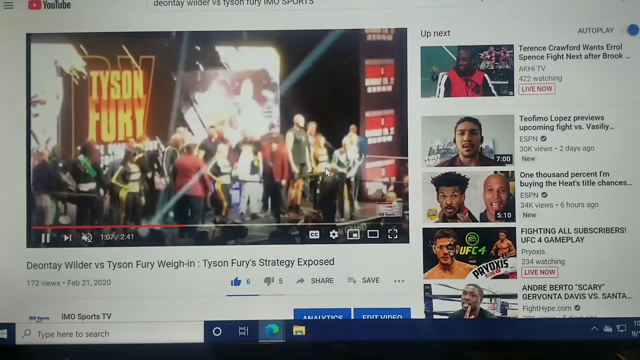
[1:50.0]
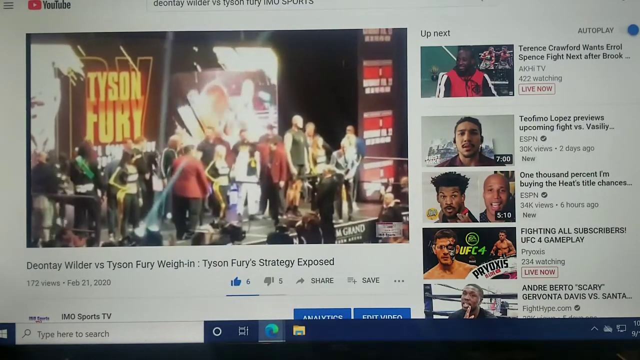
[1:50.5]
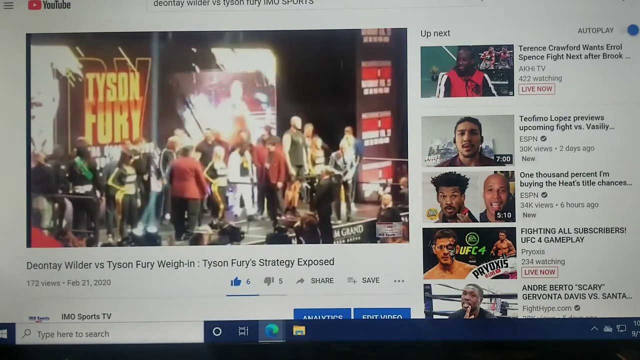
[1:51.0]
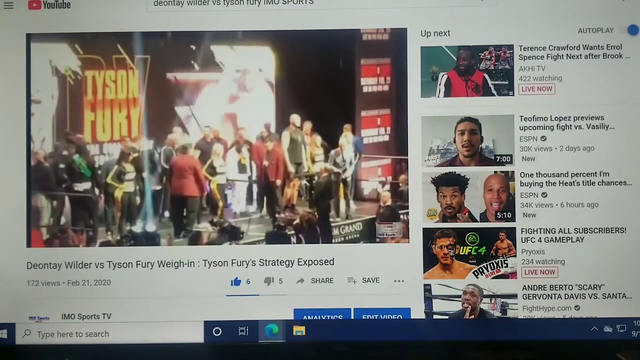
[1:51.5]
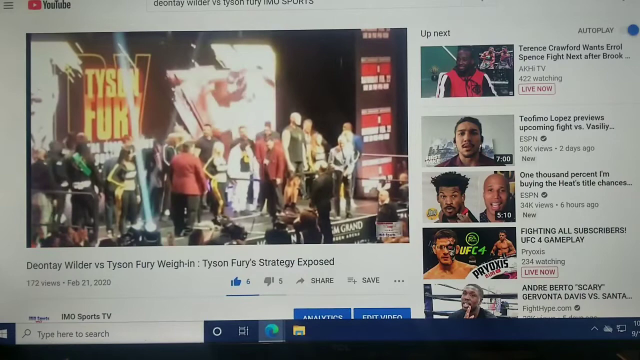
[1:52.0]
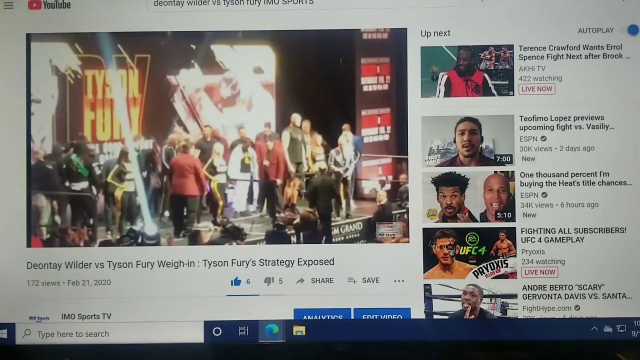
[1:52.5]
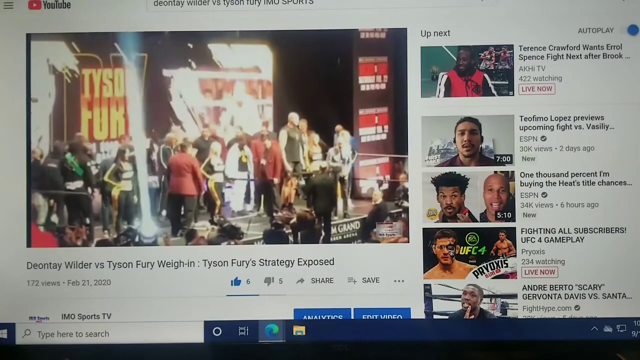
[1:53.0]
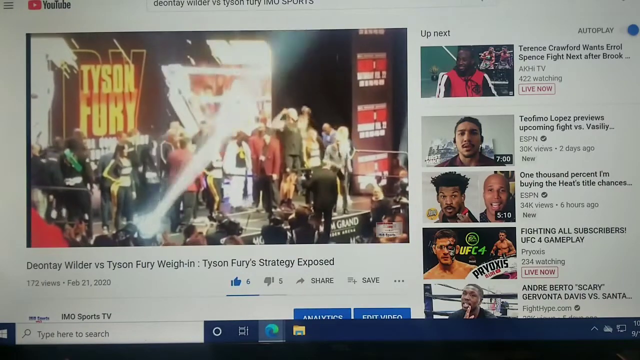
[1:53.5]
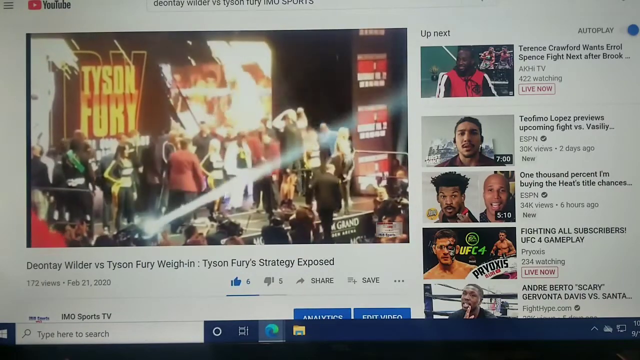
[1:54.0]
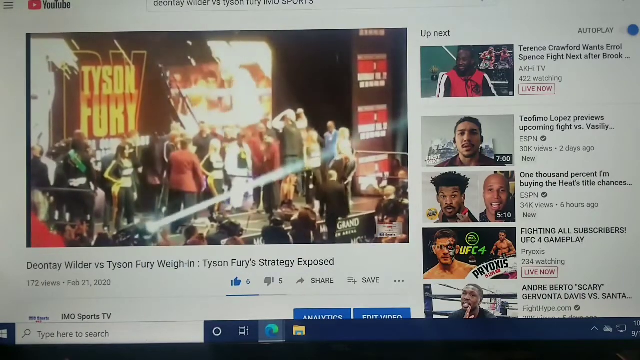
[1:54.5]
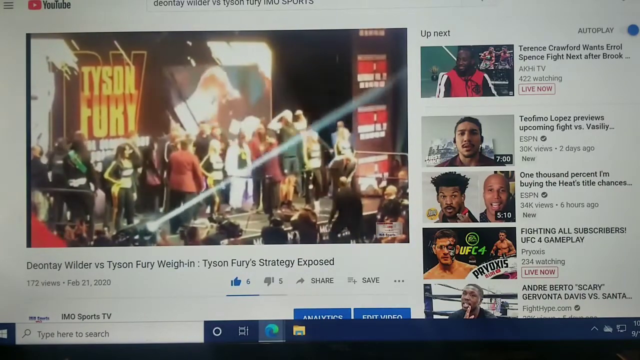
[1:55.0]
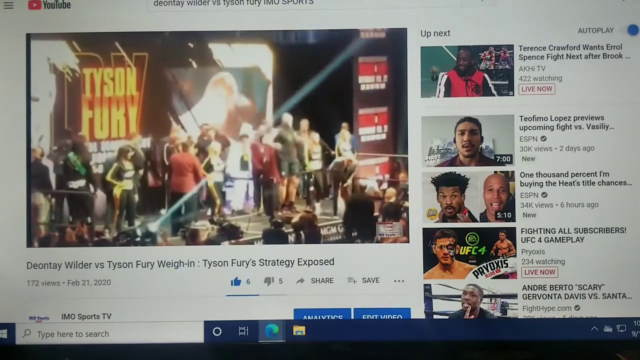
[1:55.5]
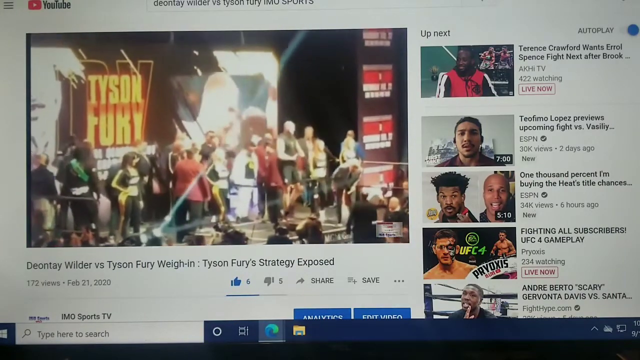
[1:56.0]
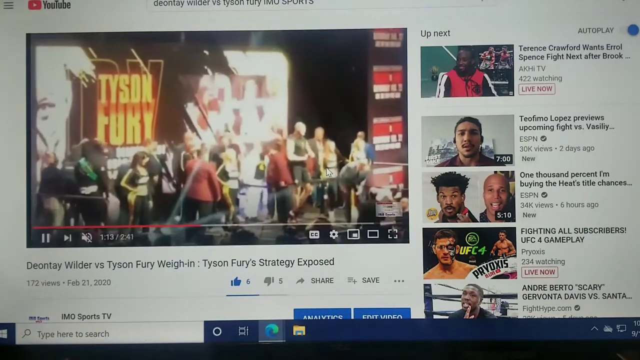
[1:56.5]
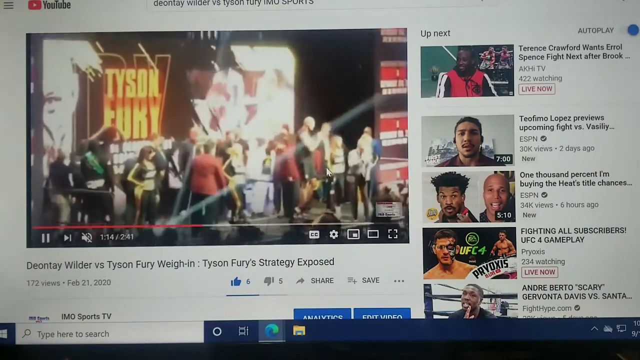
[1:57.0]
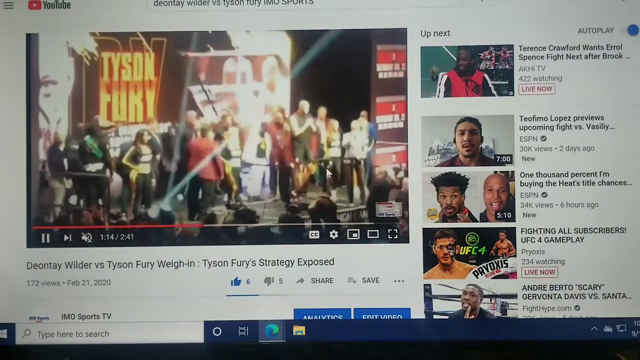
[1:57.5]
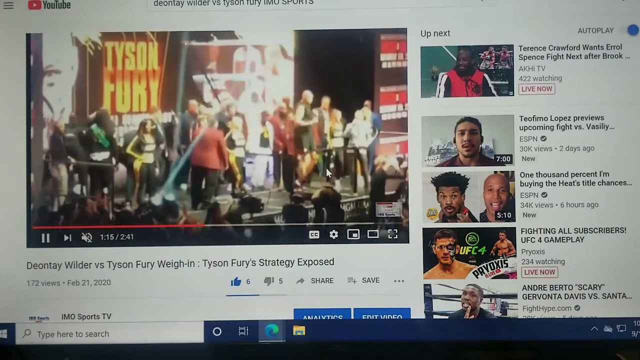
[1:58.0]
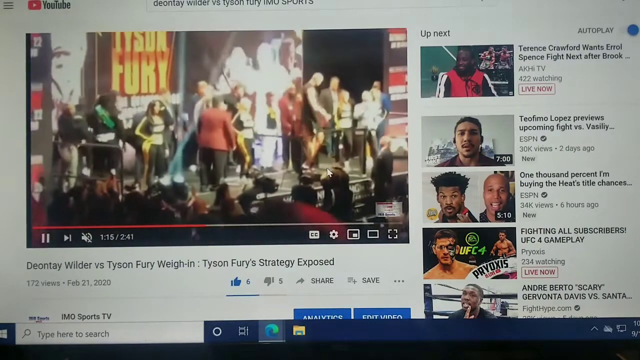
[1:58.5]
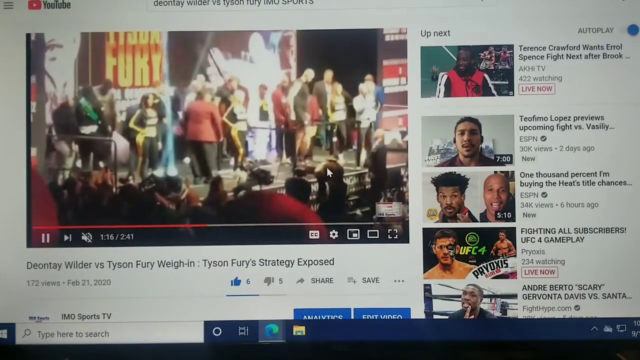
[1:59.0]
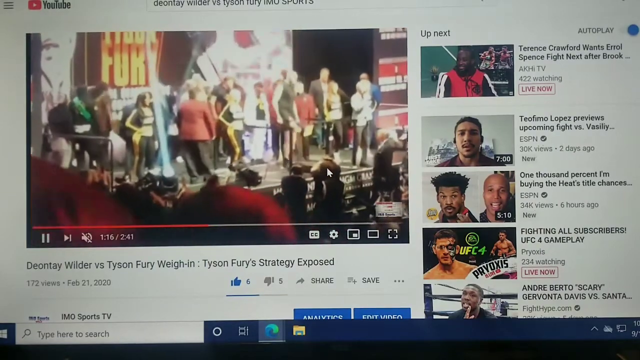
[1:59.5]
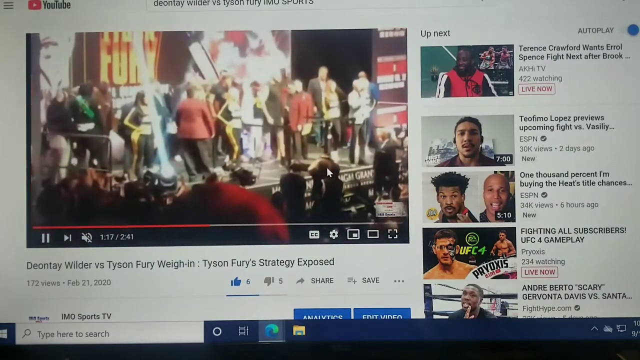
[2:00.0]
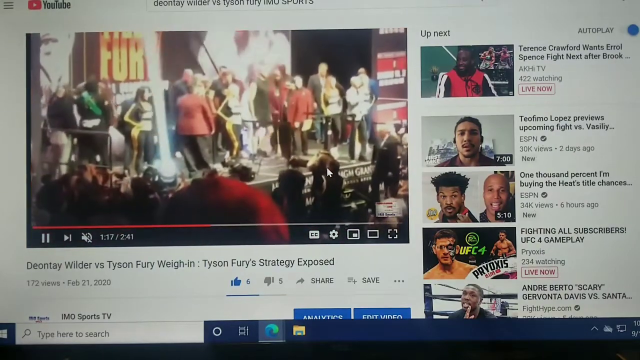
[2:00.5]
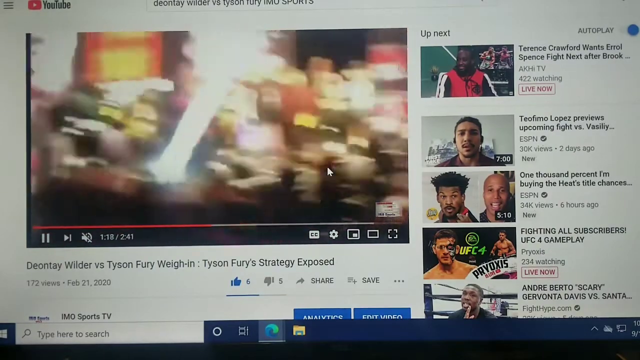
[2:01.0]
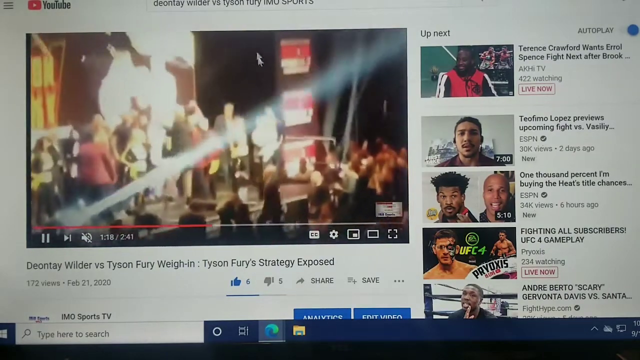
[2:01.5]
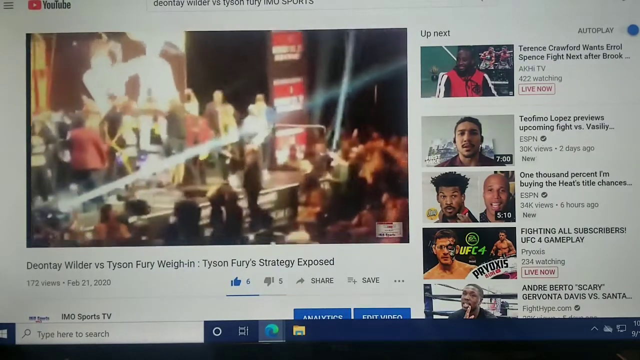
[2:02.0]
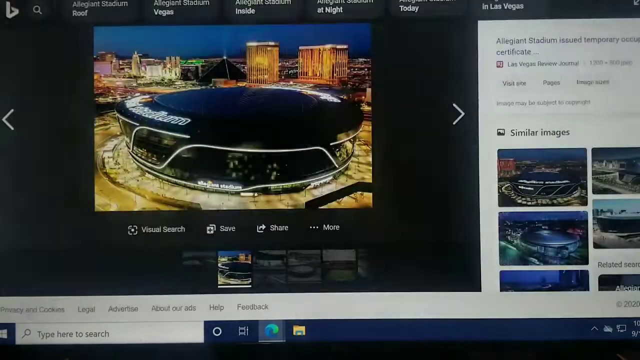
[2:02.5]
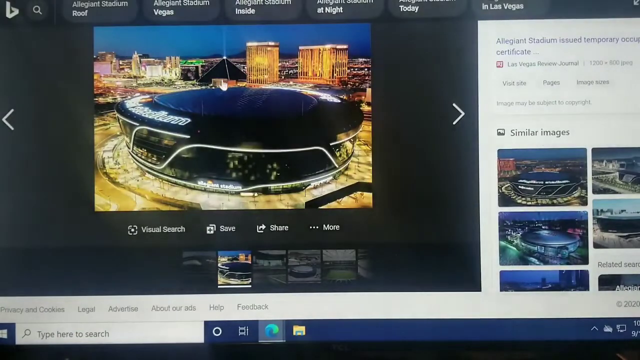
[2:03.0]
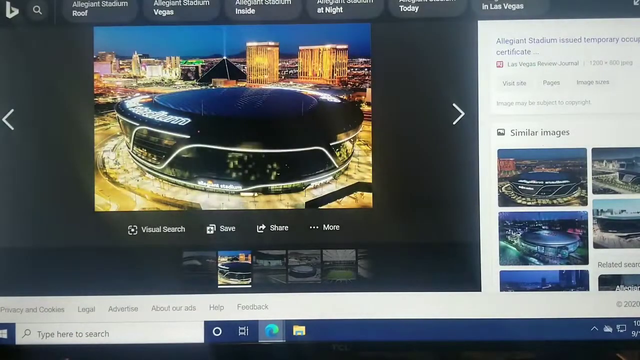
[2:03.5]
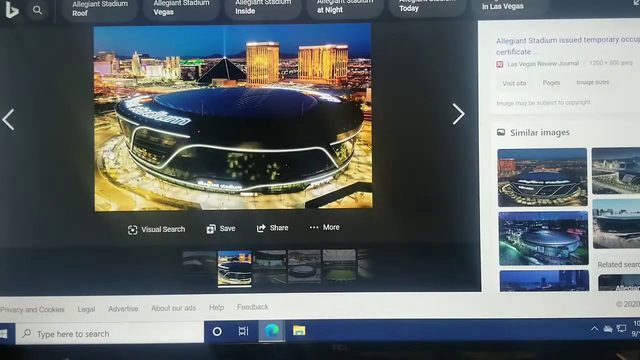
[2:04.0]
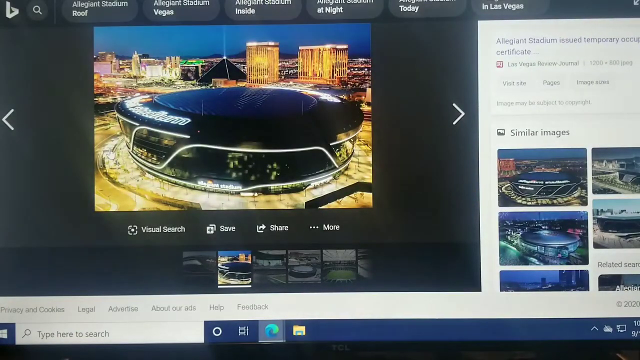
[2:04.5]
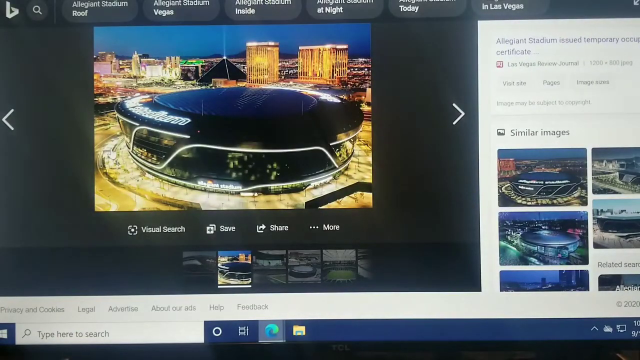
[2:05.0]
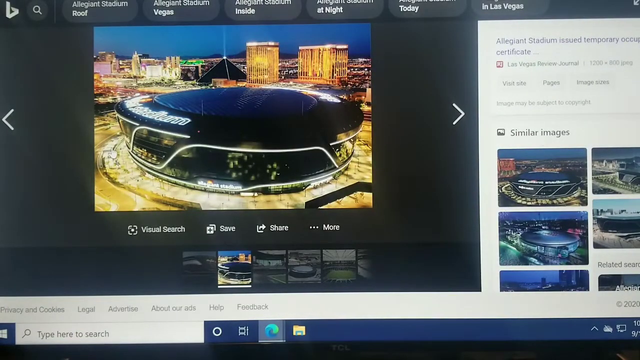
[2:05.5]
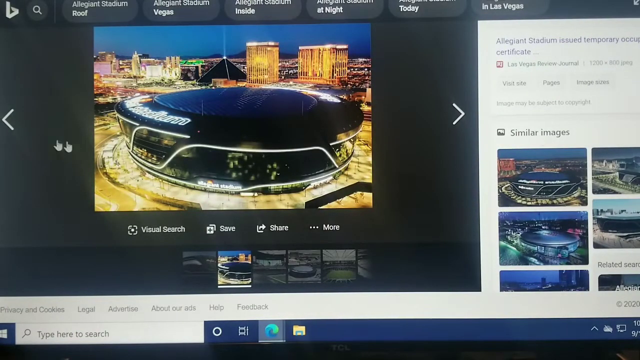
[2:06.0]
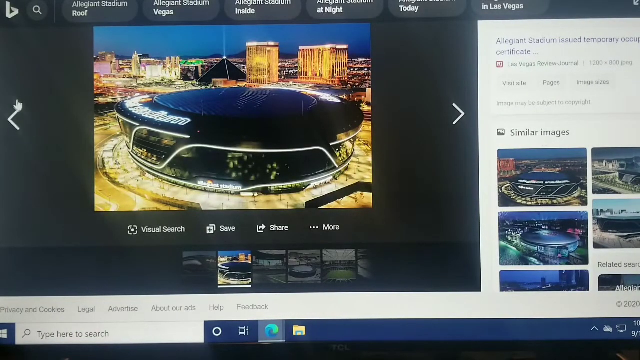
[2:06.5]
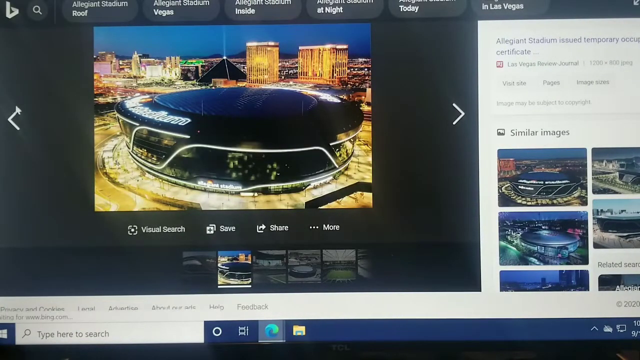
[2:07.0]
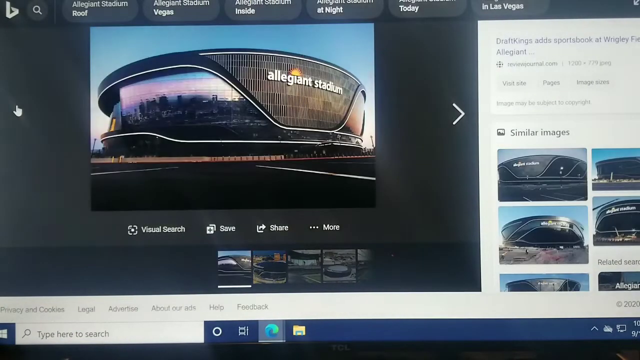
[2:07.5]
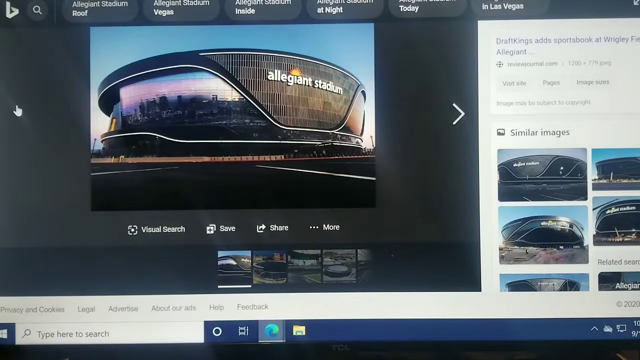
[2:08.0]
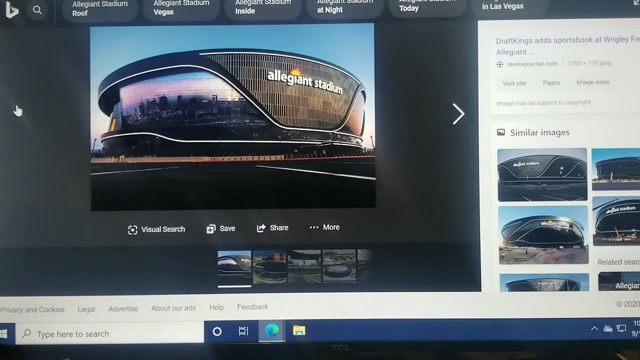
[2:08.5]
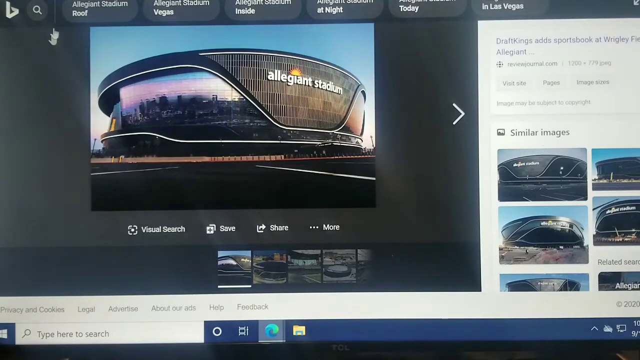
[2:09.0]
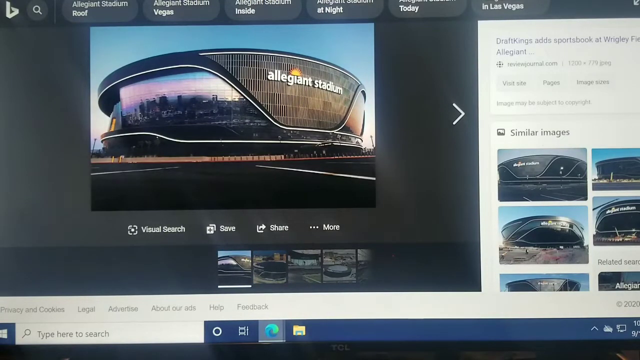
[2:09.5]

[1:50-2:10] Someone is filming their computer screen with a YouTube video playing that involves Tyson Fury. On the stage, Tyson Fury is surrounded by a bunch of people, and the backdrop for the stage is his name. He lifts his arms up in the air and flexes his biceps while a big spotlight moves. Then he acts like he is throwing punches, and he steps down off the platform he had been standing on. The white cursor then switches views to still photos of Allegiant Stadium, with quick mouse movements sweeping across the screen. The photos are daytime photos of the stadium. The mouse moves very quickly across the screen, kind of up and down and then to the left, and then clicks on one of the white arrows.